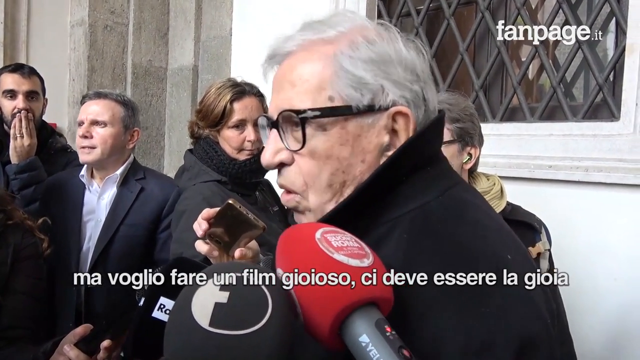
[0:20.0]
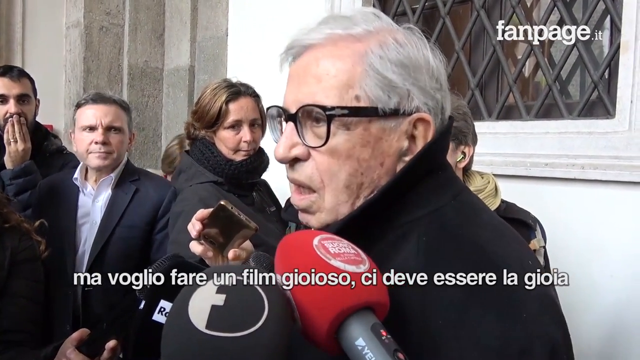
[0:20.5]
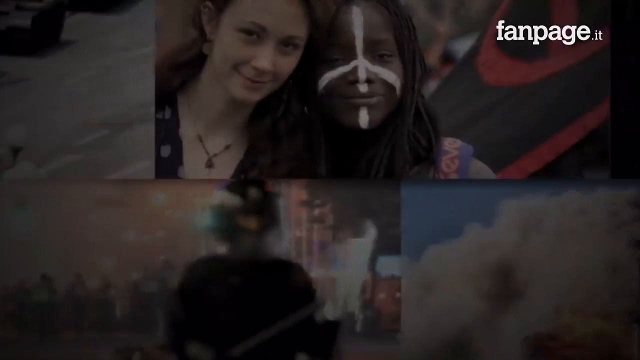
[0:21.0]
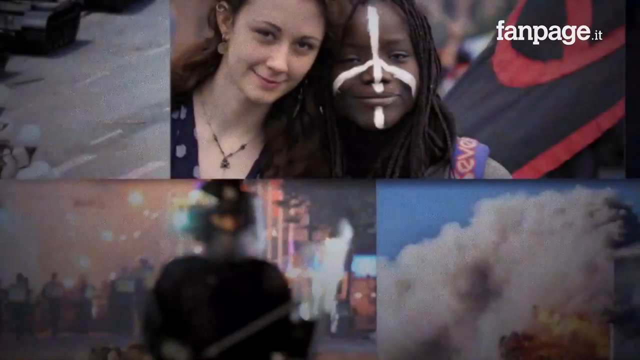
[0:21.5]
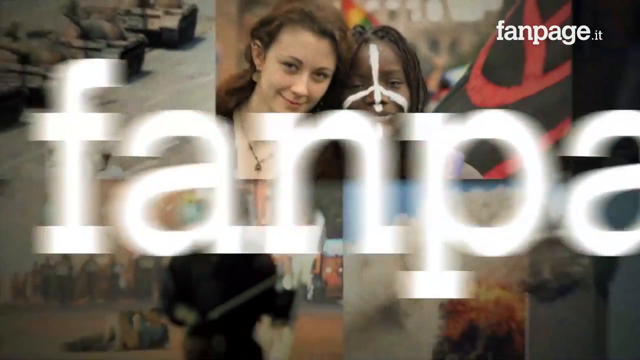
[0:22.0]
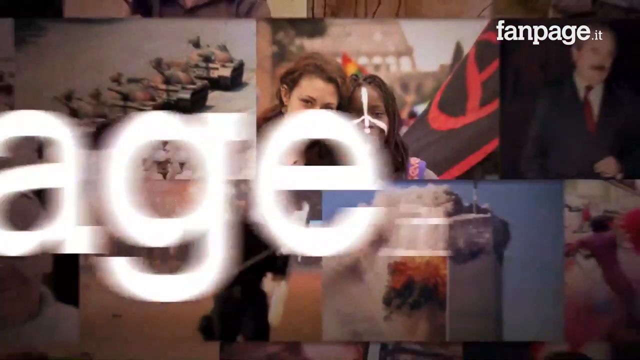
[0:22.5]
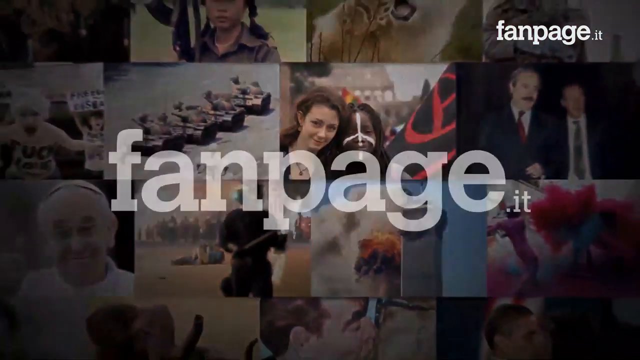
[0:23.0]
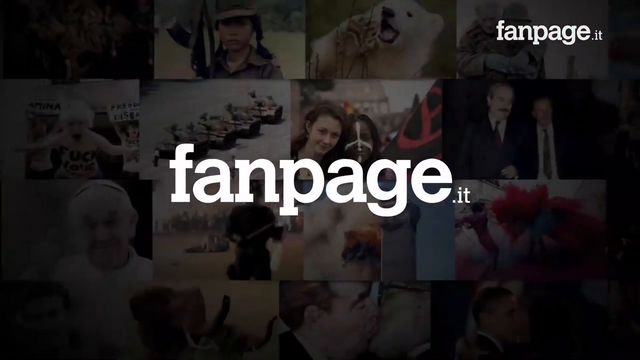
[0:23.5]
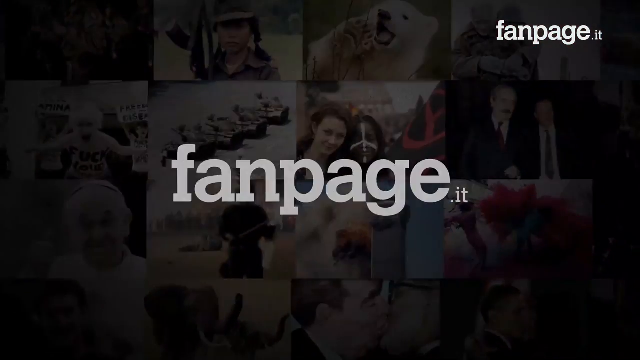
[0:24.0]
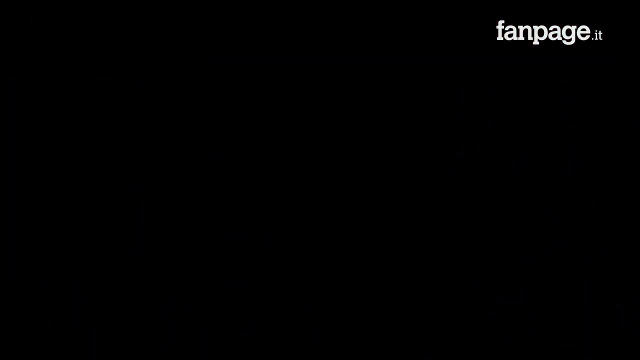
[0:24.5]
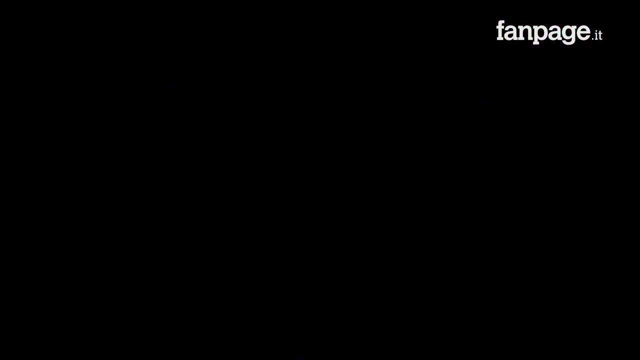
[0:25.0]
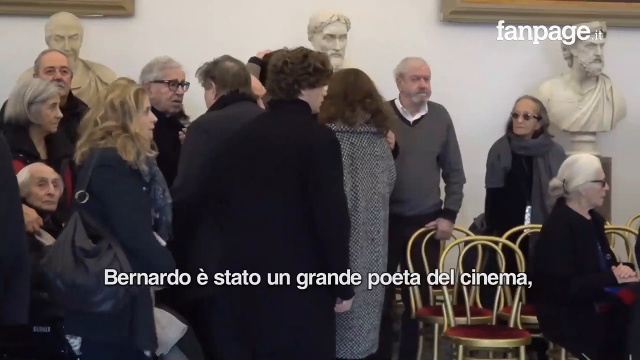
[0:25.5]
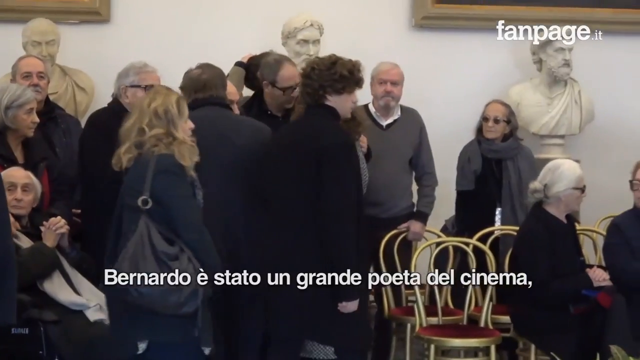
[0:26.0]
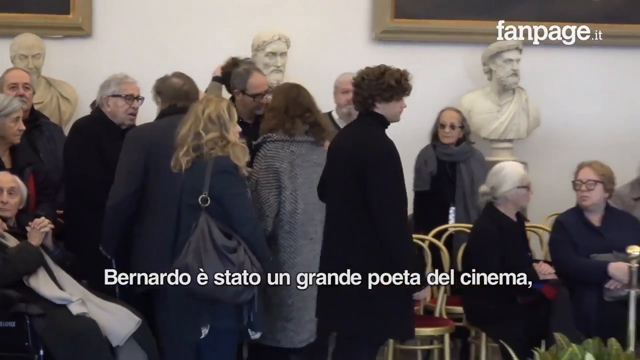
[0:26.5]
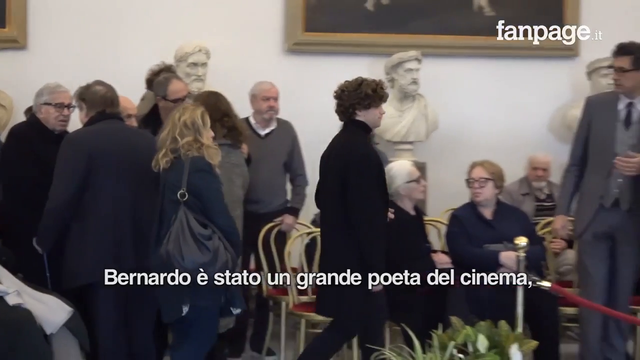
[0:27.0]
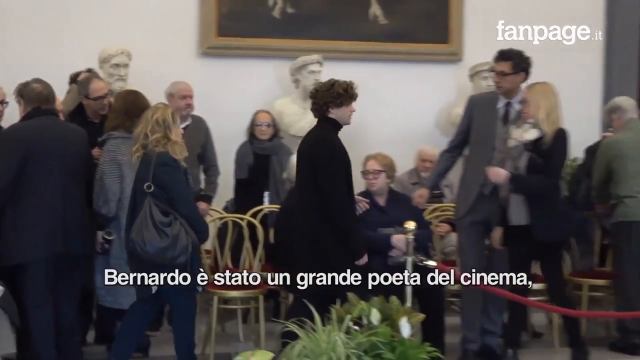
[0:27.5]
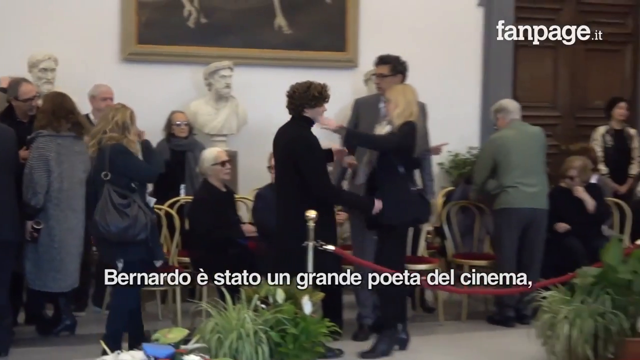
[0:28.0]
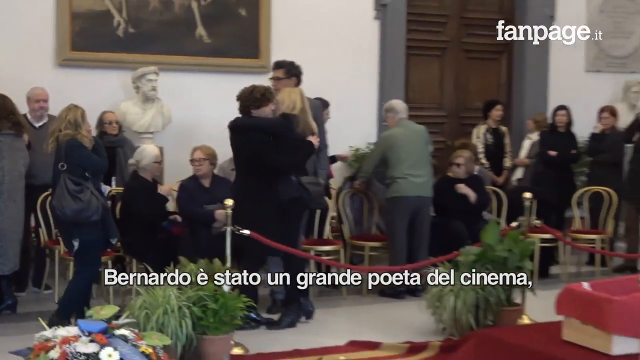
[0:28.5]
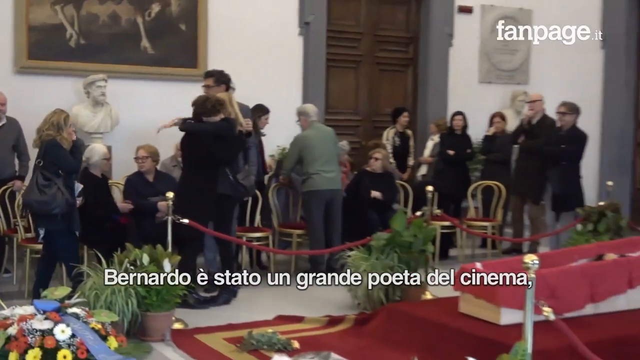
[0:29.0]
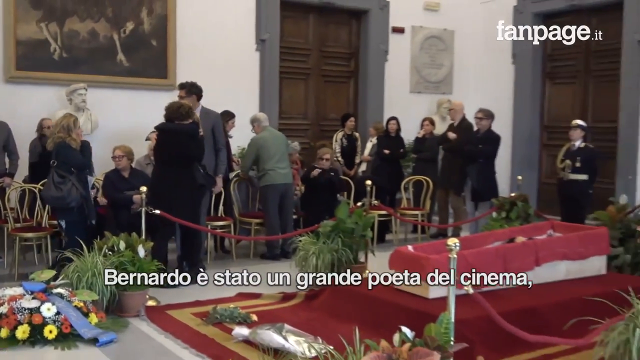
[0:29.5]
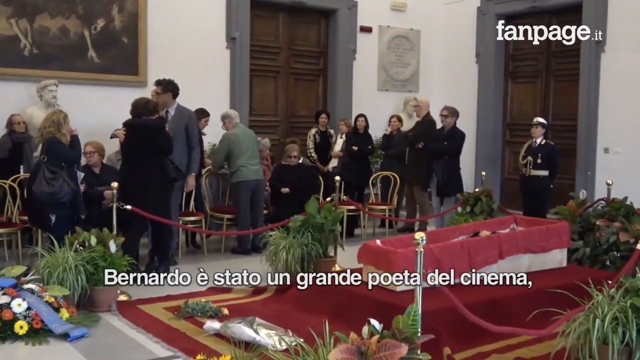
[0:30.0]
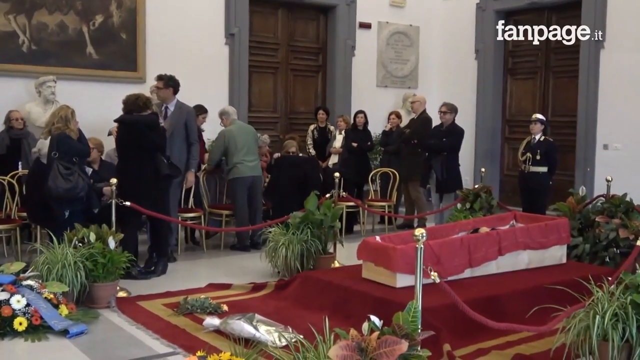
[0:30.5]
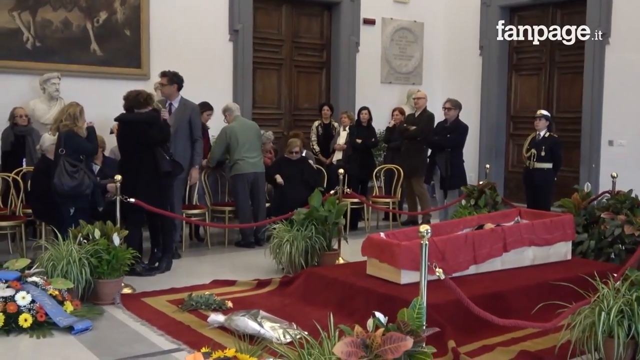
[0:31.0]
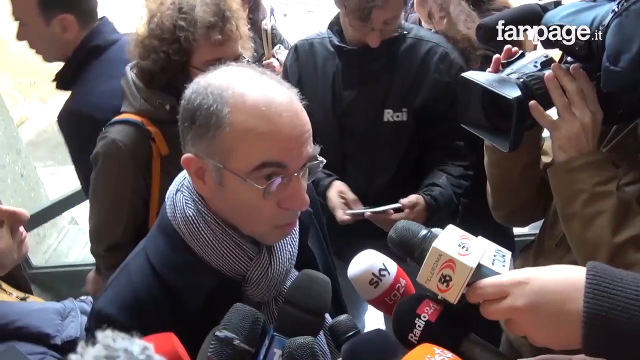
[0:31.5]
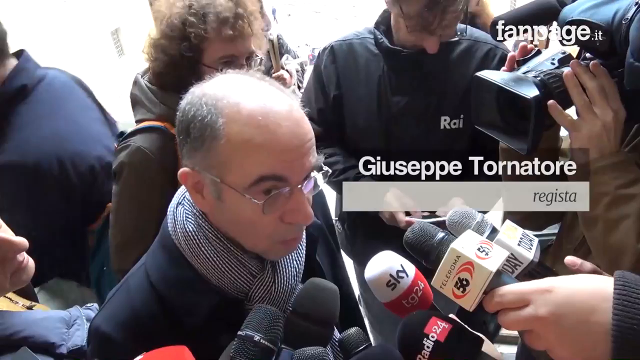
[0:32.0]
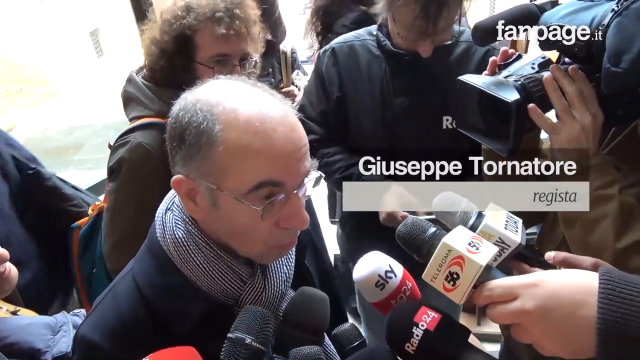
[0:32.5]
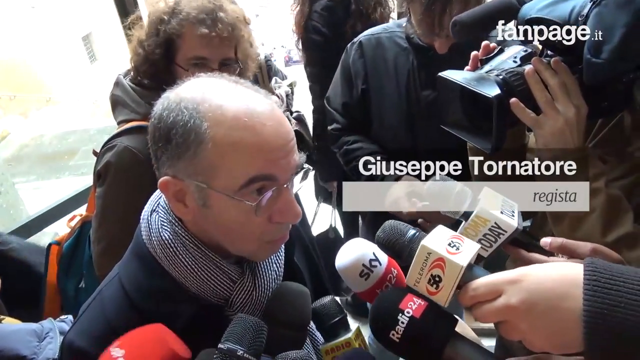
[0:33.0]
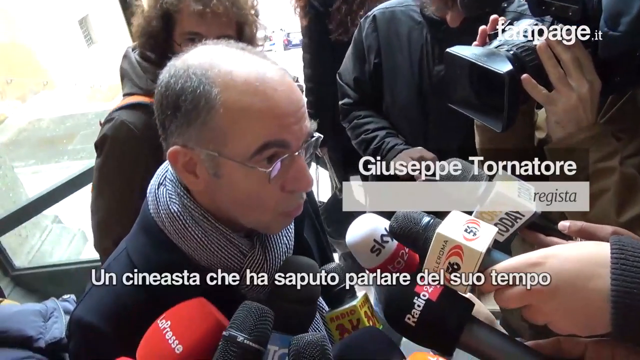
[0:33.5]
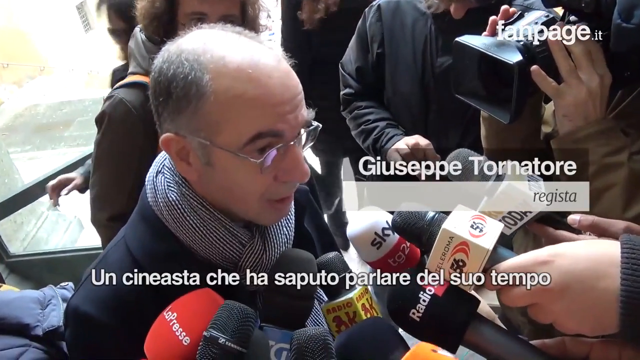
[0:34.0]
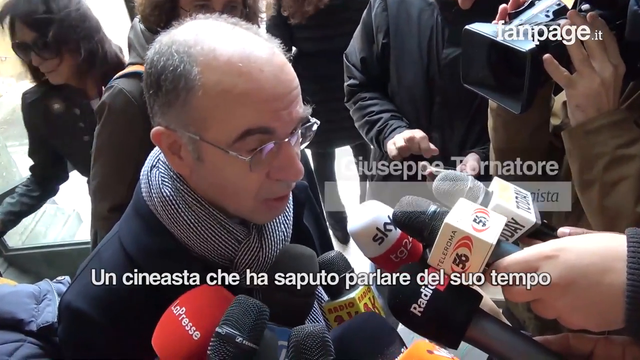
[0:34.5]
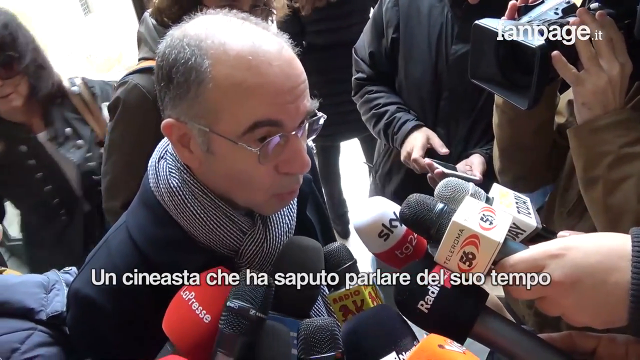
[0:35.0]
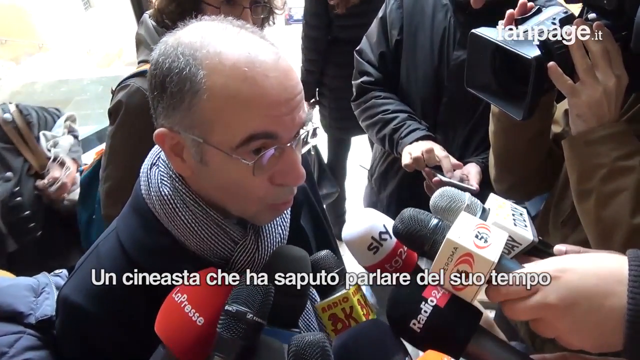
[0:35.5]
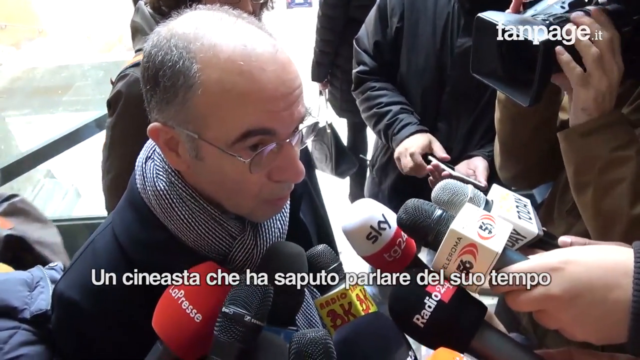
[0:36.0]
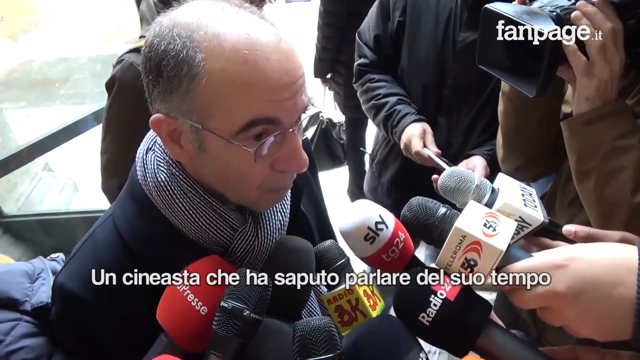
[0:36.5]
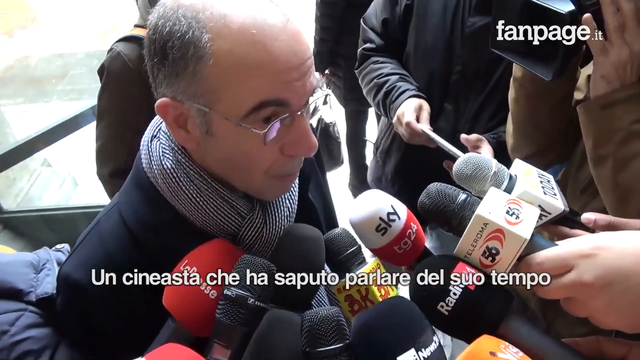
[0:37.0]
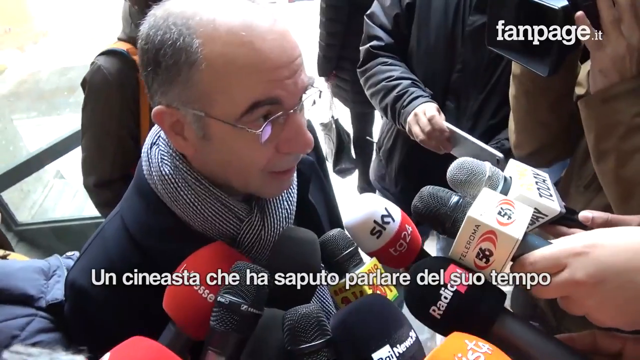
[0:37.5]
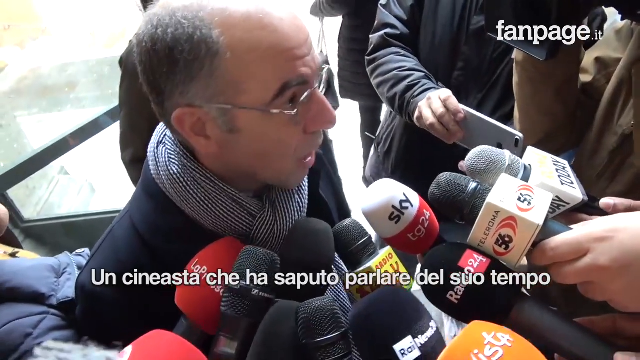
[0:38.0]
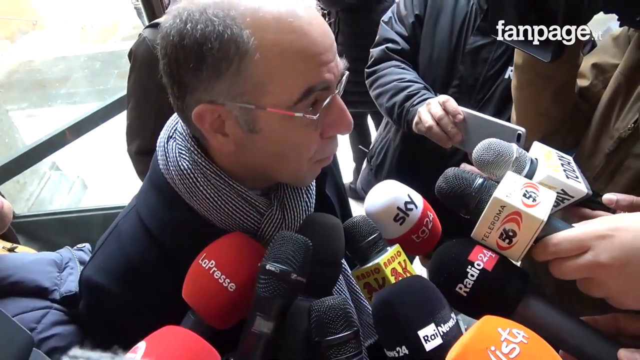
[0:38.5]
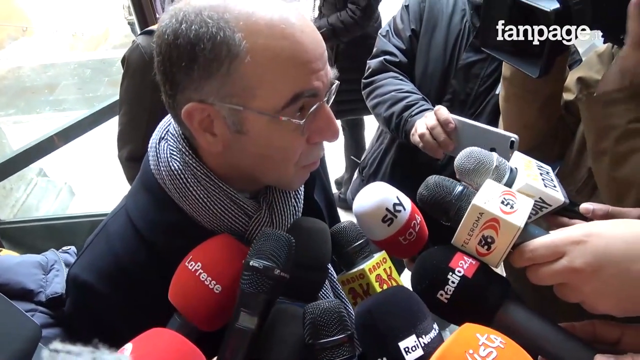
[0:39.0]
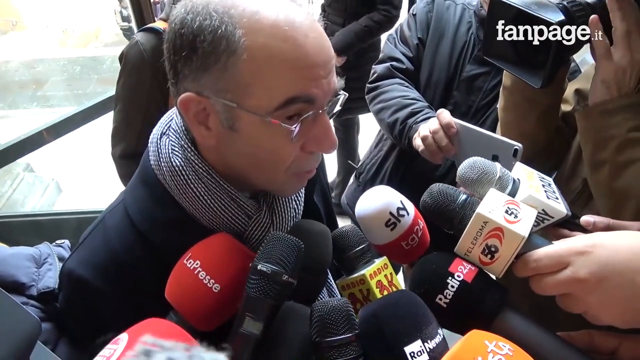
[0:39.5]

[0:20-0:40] The video cuts to the opening credits, a collage of photographs of world events. One shows the Twin Towers on 9-11, with one tower already in flames. Another looks like it is from the Iraq war. One shows military tanks in a row, possibly at Tiananmen Square. Others show Vincente Fox, the former president of Mexico, and Holi, a Hindu festival. The collage includes about 10 to 12 newsworthy events from the past 20 or 30 years. The name "fanpage.it" then appears as a text overlay in the middle of the screen. The image fades to black and cuts to a very wide, roomy indoor conference room, with chairs and people sitting in them and standing. There are marble busts and a velvet rope area. A younger man with zoomer broccoli hair and a very long coat approaches a woman, and they hug in front of everyone. It looks like some kind of funeral or burial ceremony. In the middle is what appears to be a very small, open coffin covered in a velvet cloth, shaped like a coffin with something inside; it is on top of a red carpet, with velvet ropes around the area. The people are all dressed very formally with coats on, and military guards in full outfit are watching over everyone. The room's tall doors look like they are made of wood, and marble busts are against the wall, with framed oil canvas paintings mounted on the white walls. The video then cuts to an outdoor interview with a balding man named Giuseppe Tornatore, who looks like he is in his fifties and wears a scarf. Many reporters and a cameraman are around him, and it looks like an impromptu interview. As he talks, Italian subtitles appear at the bottom.